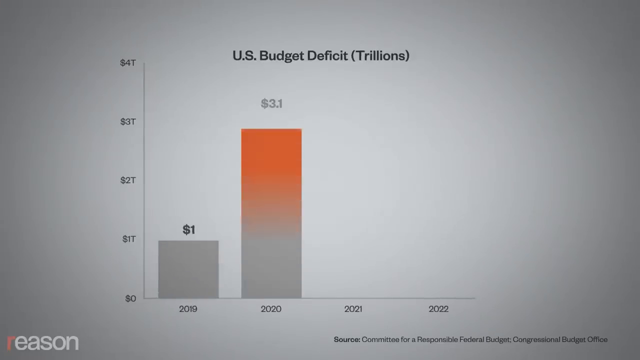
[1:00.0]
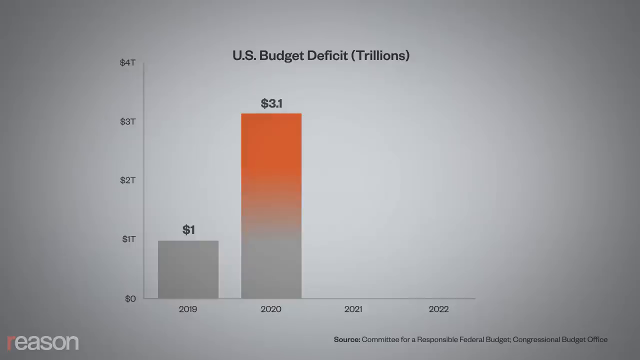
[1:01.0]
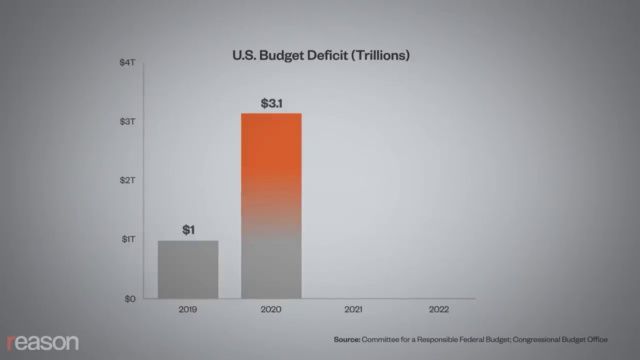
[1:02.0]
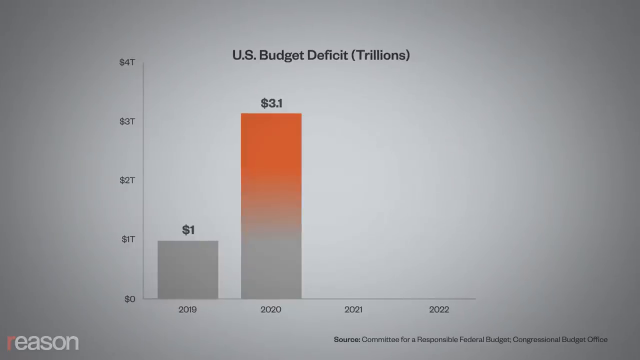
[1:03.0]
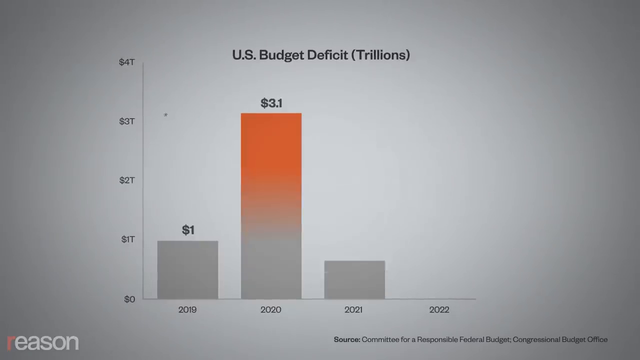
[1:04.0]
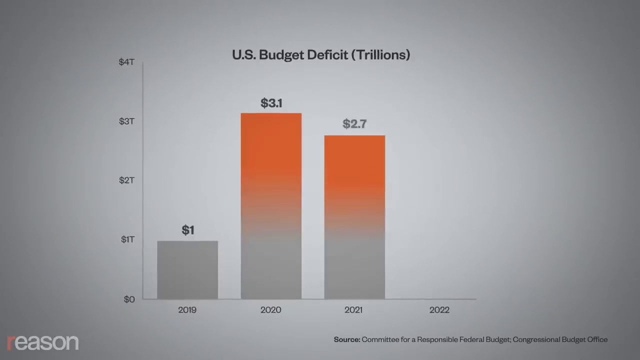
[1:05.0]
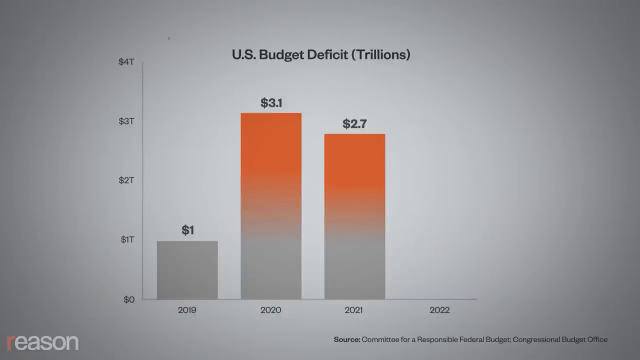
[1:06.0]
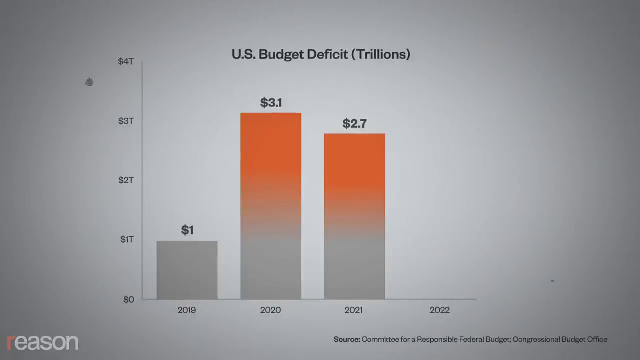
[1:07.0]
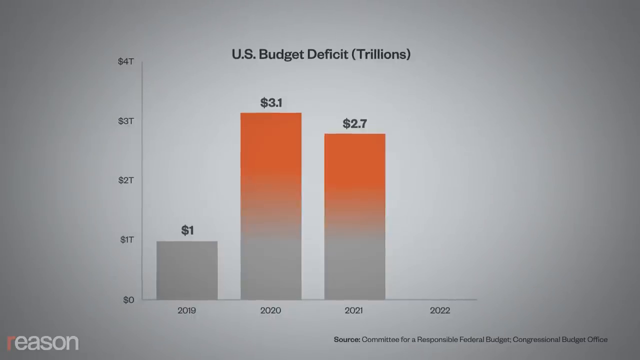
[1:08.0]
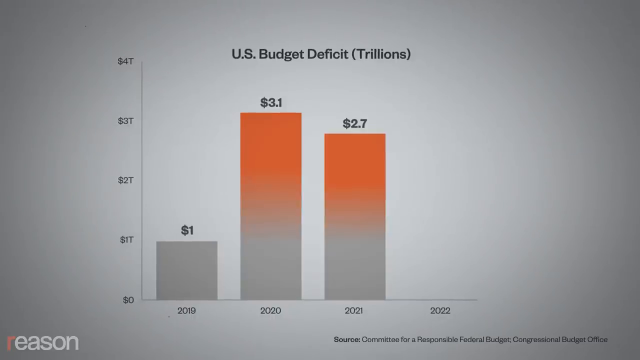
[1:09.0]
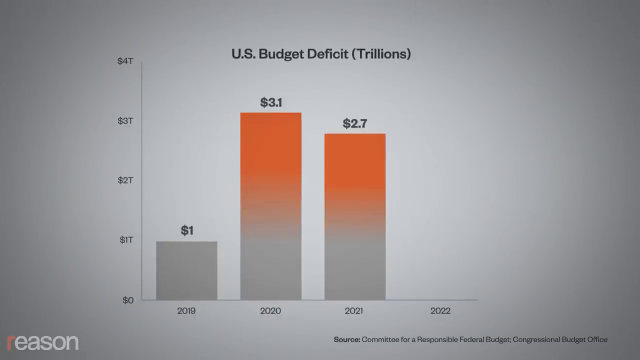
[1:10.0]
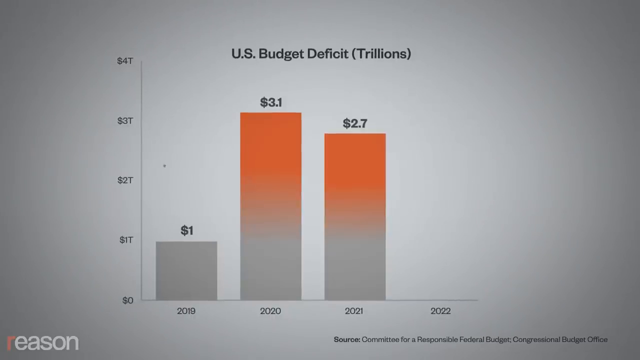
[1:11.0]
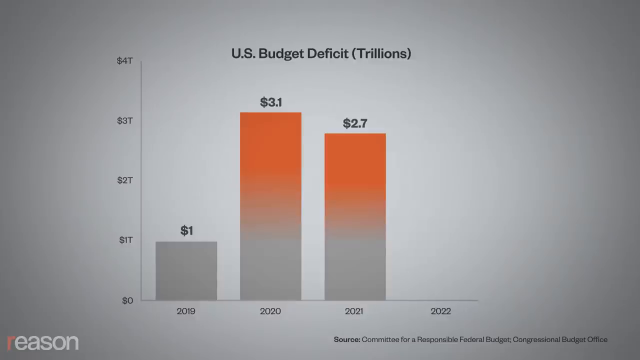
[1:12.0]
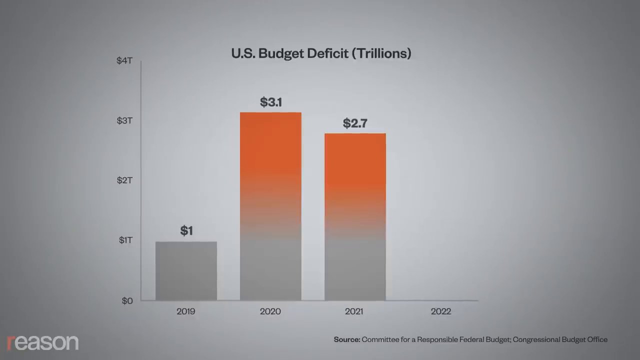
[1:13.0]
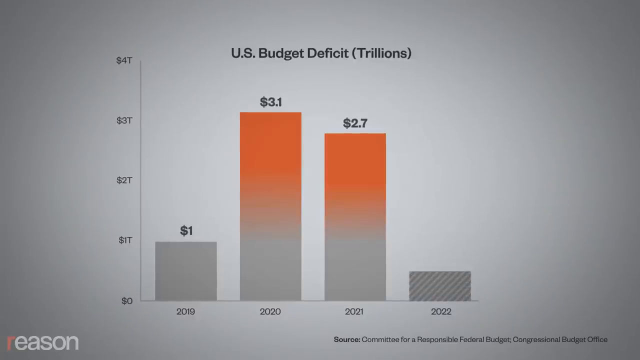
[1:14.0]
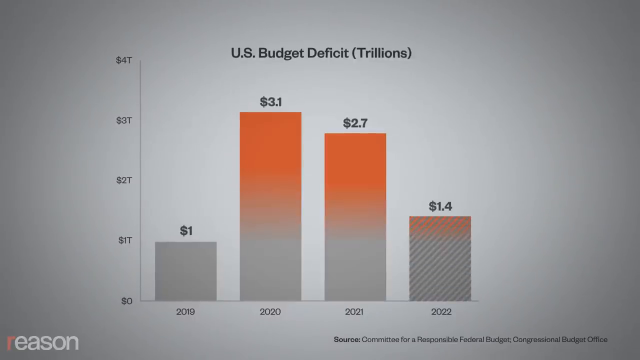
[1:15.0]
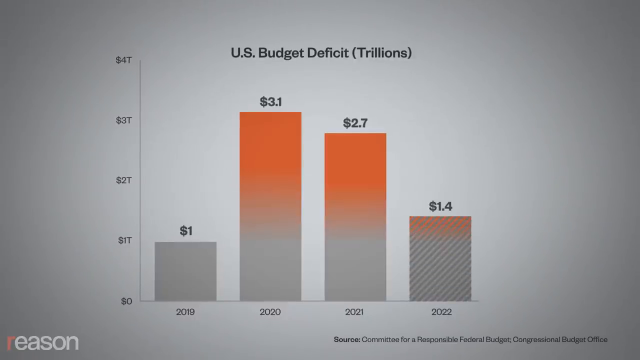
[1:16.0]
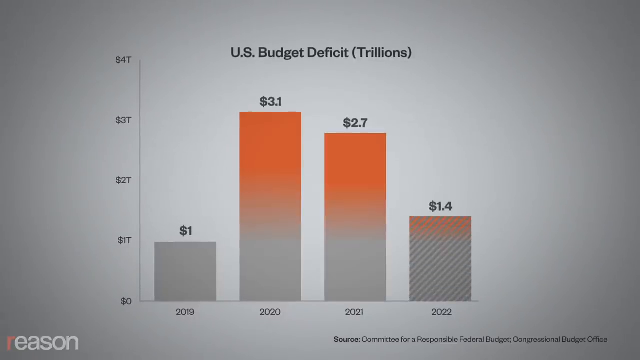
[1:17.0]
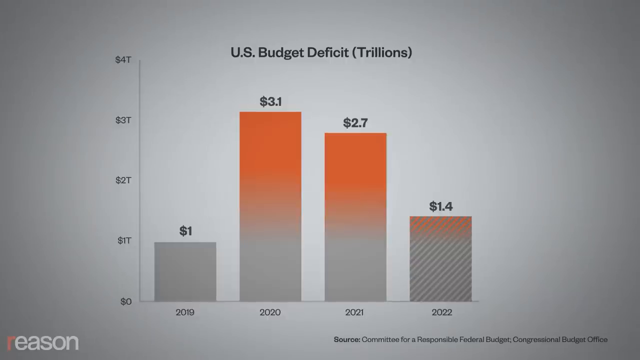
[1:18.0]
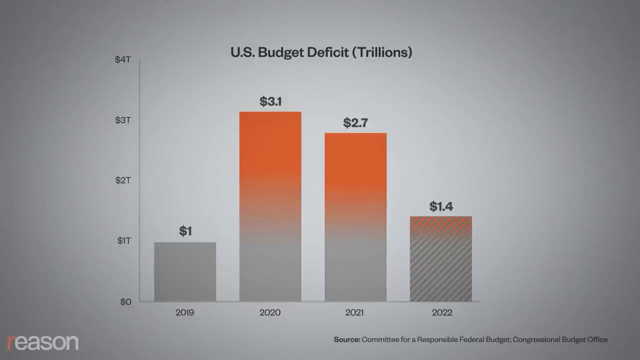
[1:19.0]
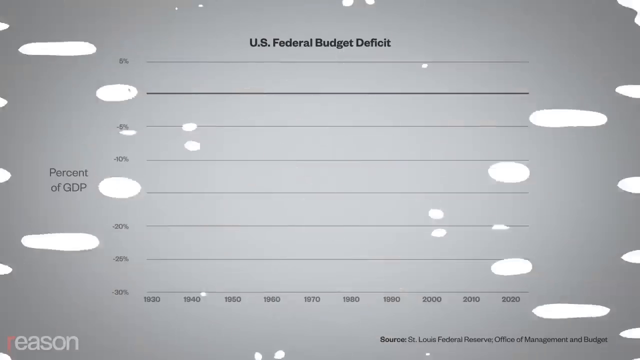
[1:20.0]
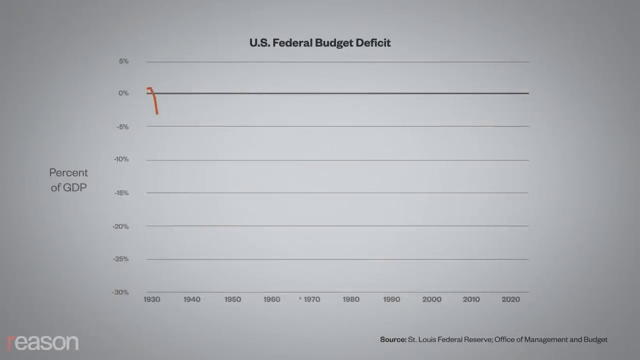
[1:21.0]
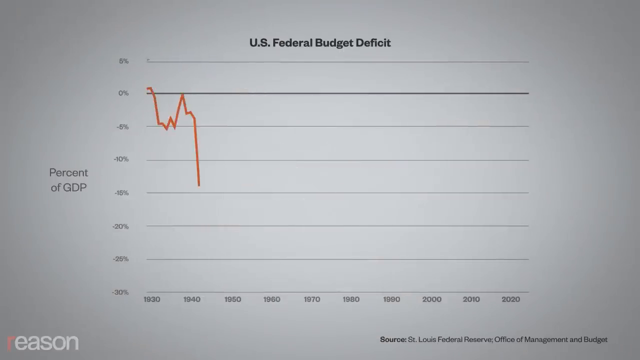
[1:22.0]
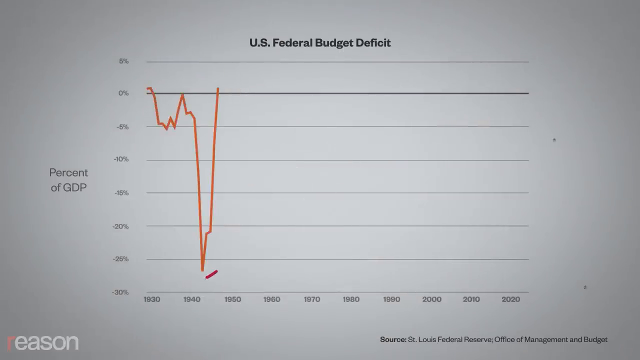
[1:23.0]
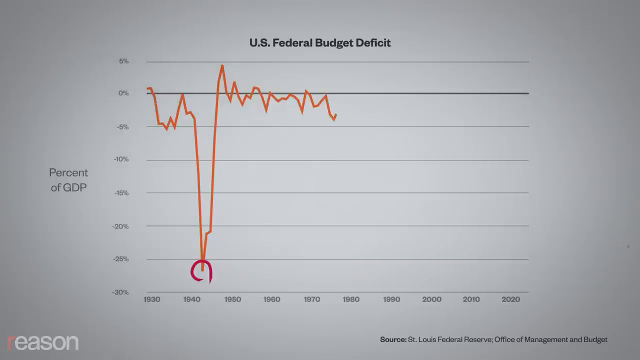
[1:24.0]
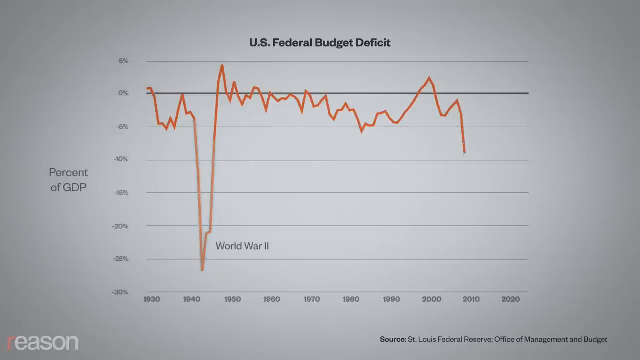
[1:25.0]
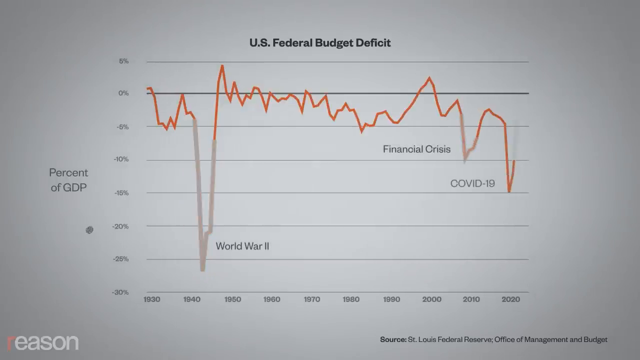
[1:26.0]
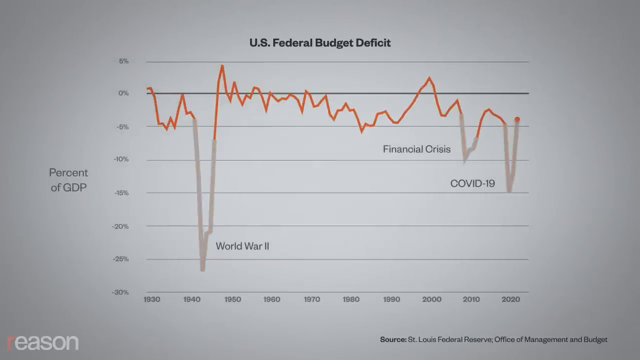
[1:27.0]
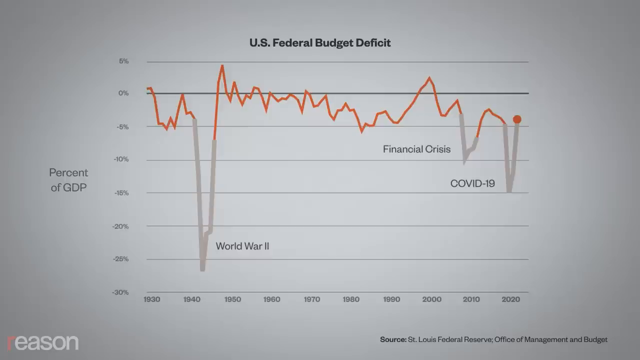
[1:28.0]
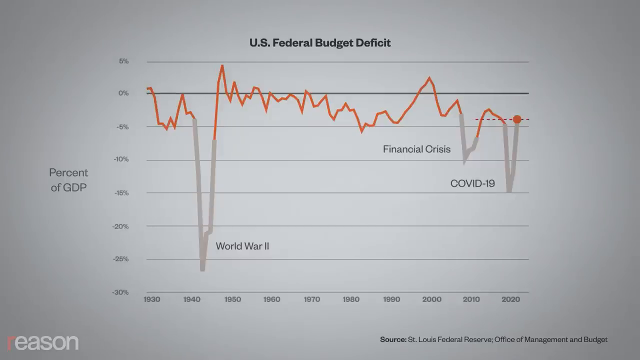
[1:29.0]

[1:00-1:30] A US budget deficit bar graph shows the years 2019, 2020, 2021 and 2022 in trillions; the bars start fairly low, rise, stay fairly high, then go back a little lower. A line graph of the US federal budget deficit follows, with several markers and a line going up and down all over the place. Its bottom axis runs in decades from 1930 through 1940, 1950, 1960, 1970, 1980, 1990, 2000 and 2010 to 2020, and its left axis runs from 5% down through 0, negative 5, negative 10, negative 15 and negative 20 to negative 25, labeled percent of GDP. Events such as World War II, the financial crisis and COVID-19 are marked on the main part of the graph.